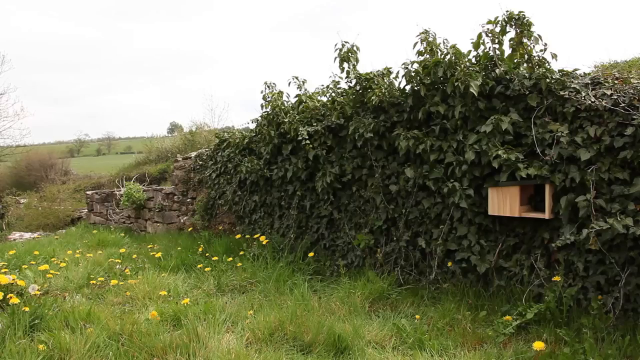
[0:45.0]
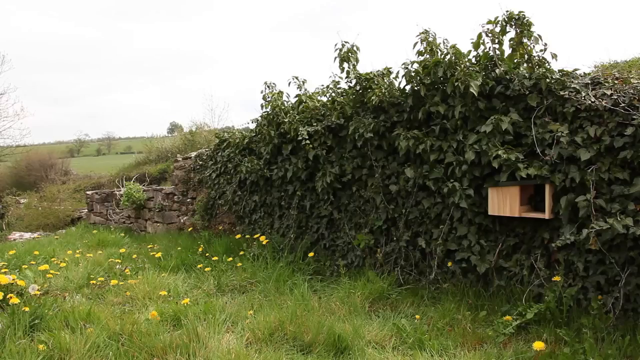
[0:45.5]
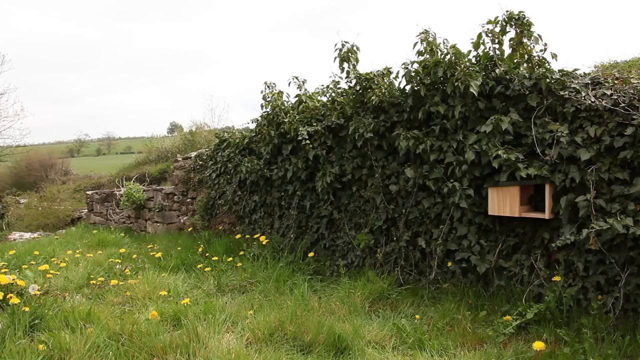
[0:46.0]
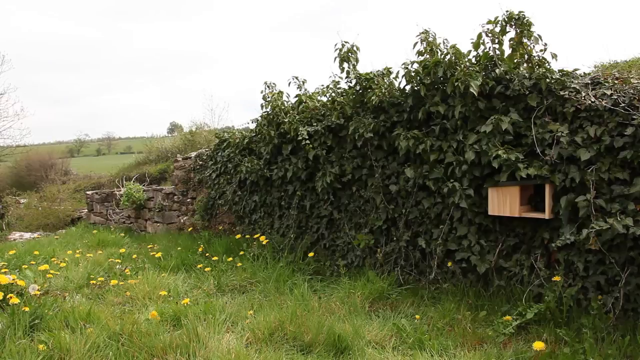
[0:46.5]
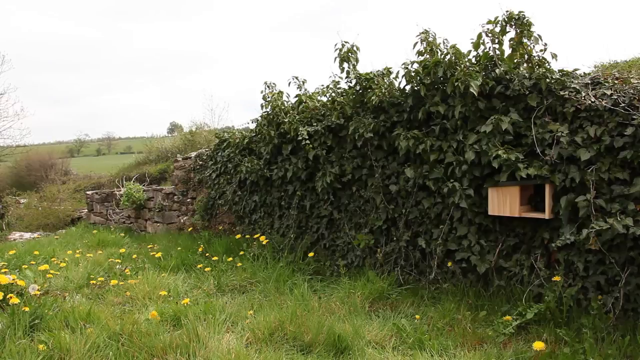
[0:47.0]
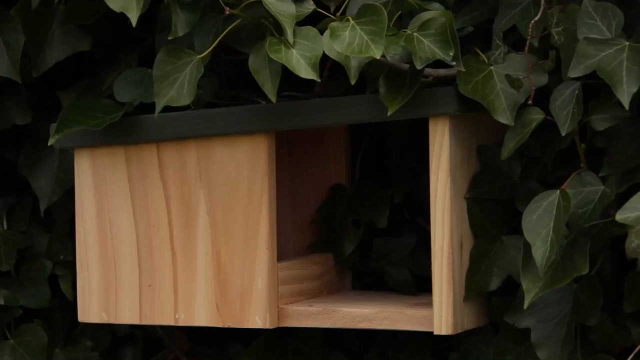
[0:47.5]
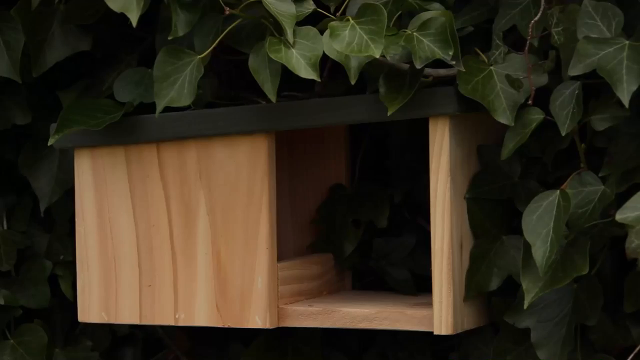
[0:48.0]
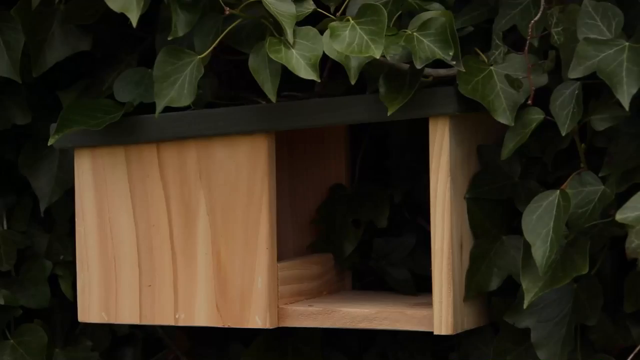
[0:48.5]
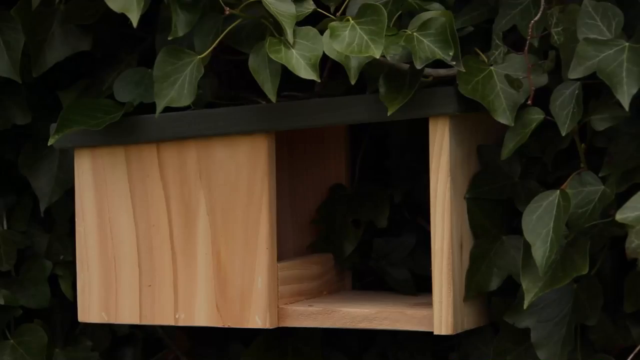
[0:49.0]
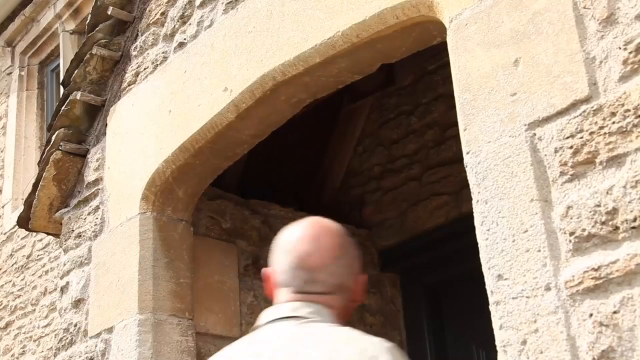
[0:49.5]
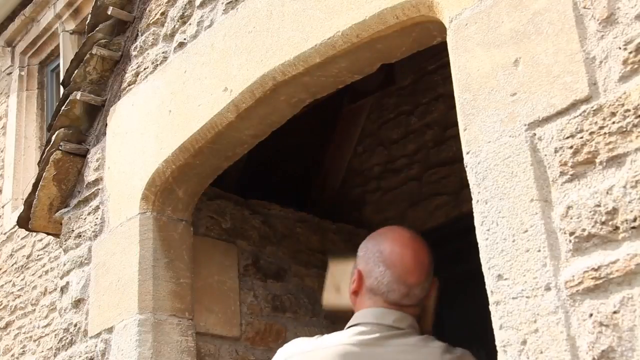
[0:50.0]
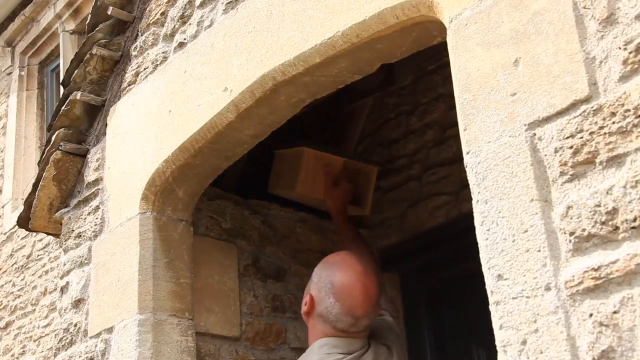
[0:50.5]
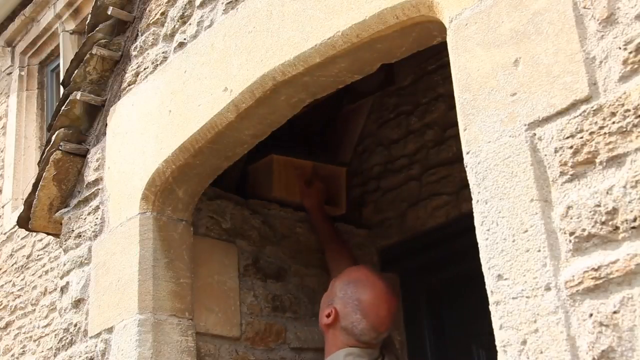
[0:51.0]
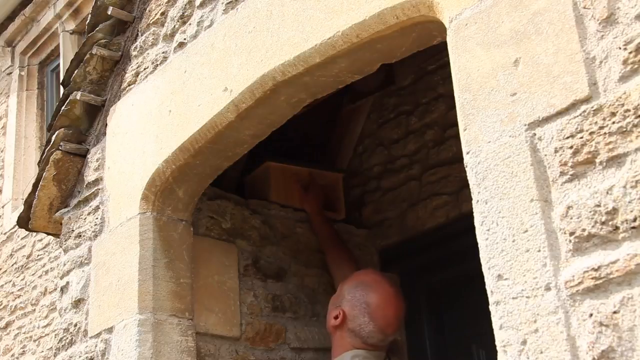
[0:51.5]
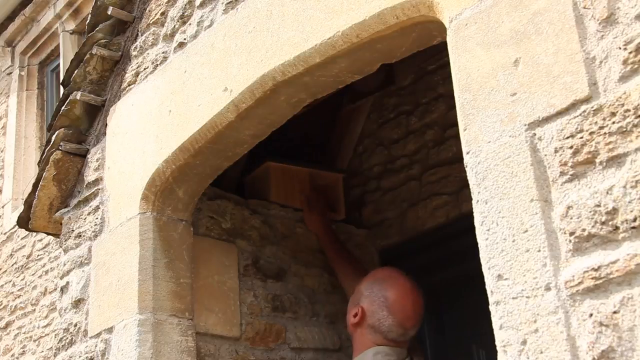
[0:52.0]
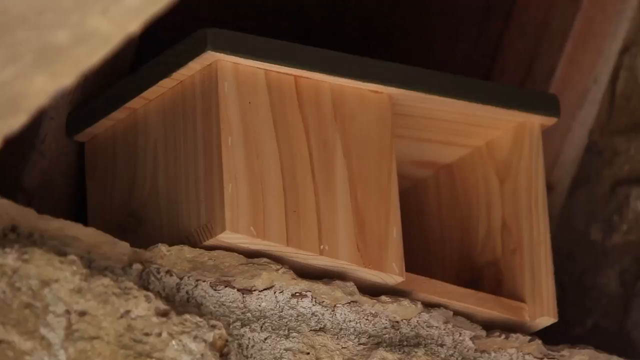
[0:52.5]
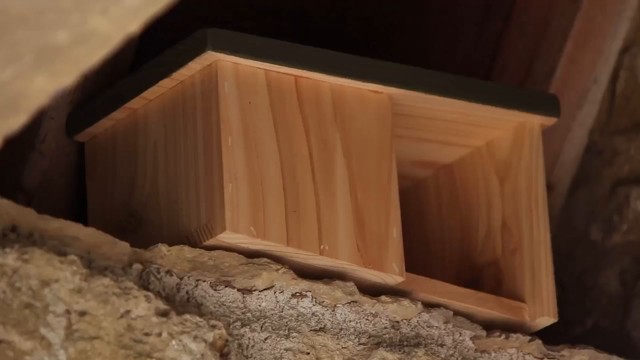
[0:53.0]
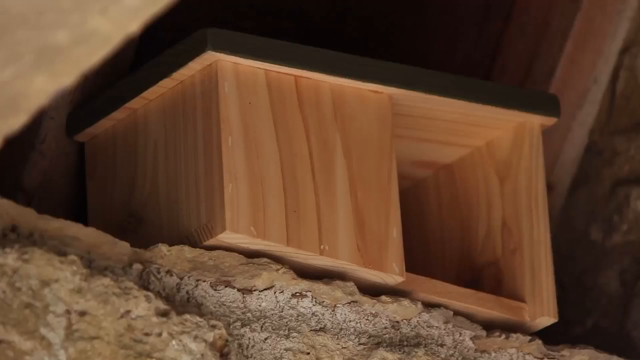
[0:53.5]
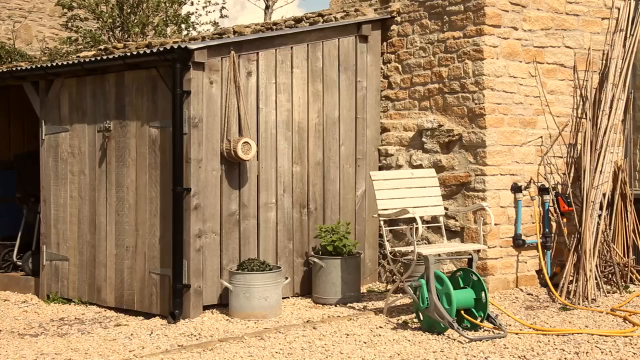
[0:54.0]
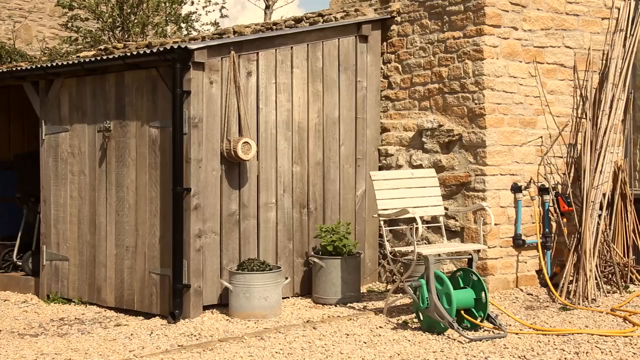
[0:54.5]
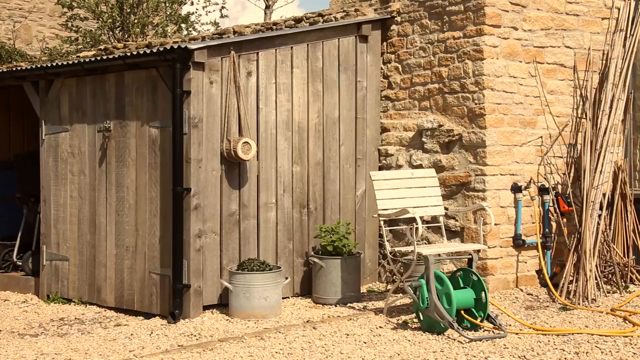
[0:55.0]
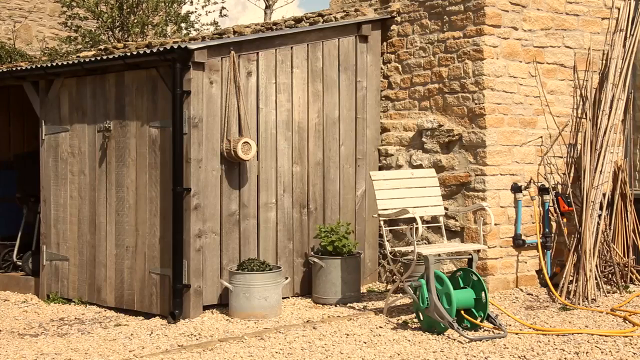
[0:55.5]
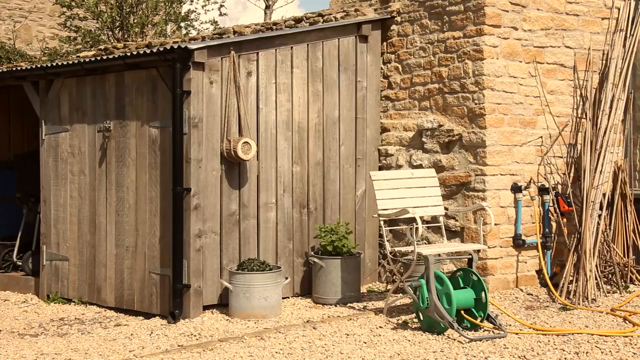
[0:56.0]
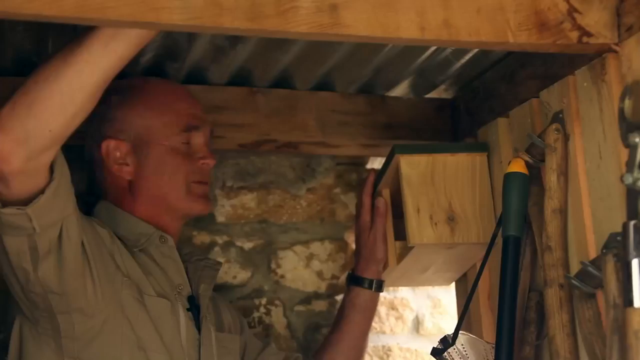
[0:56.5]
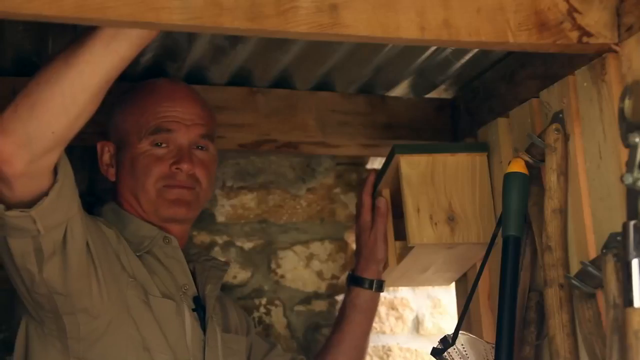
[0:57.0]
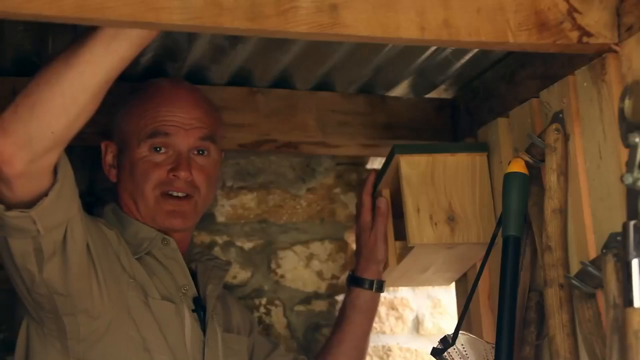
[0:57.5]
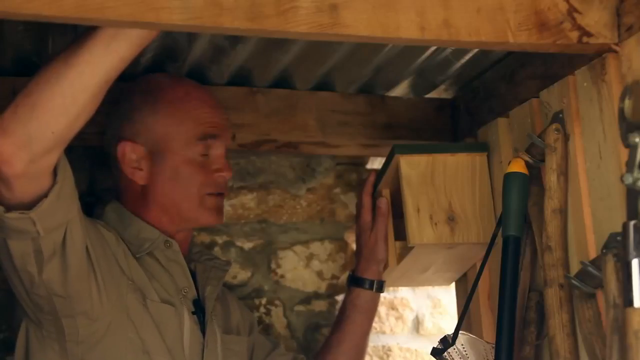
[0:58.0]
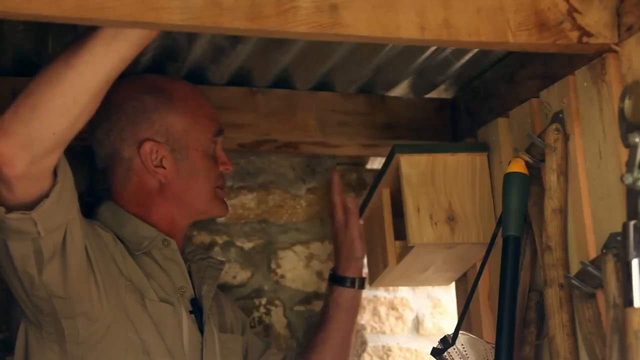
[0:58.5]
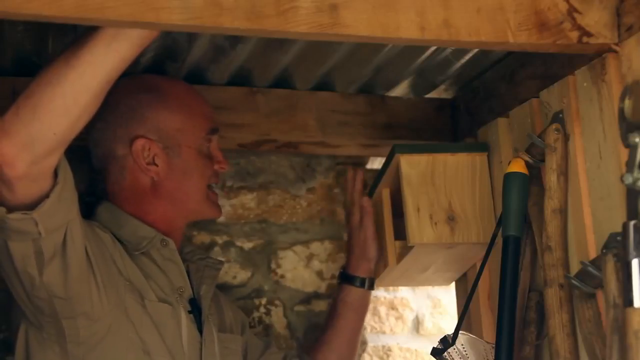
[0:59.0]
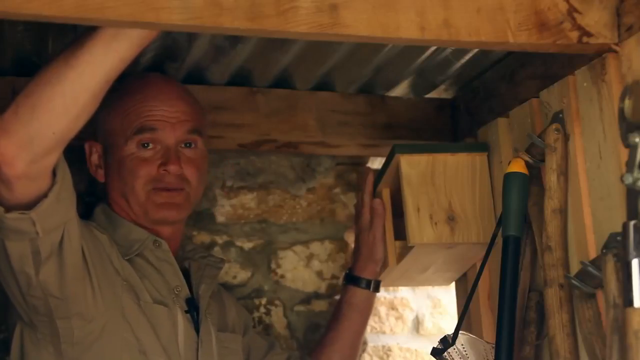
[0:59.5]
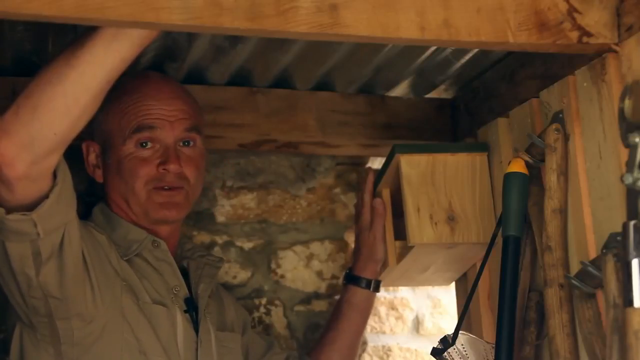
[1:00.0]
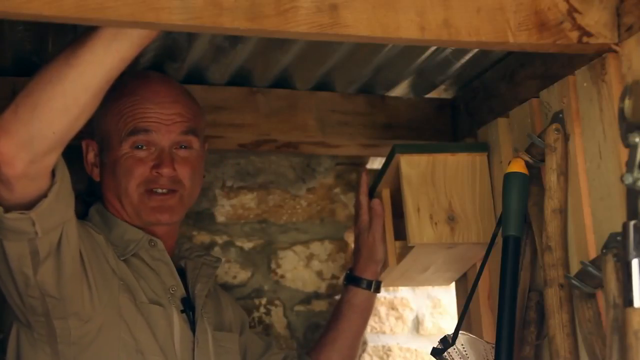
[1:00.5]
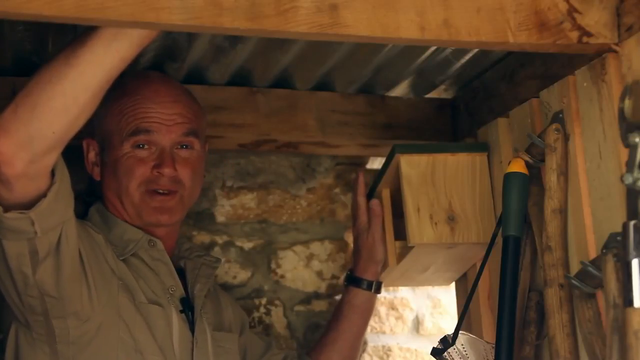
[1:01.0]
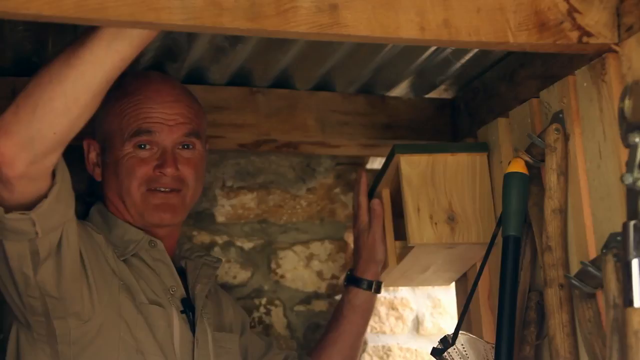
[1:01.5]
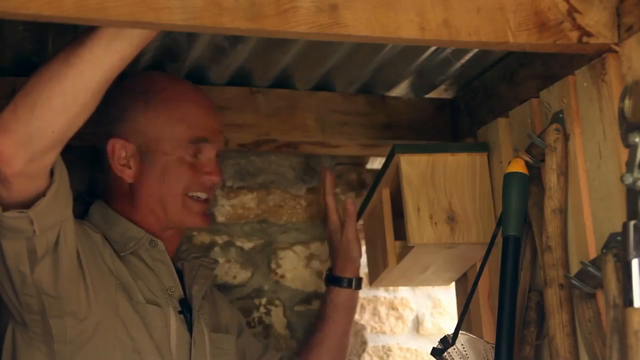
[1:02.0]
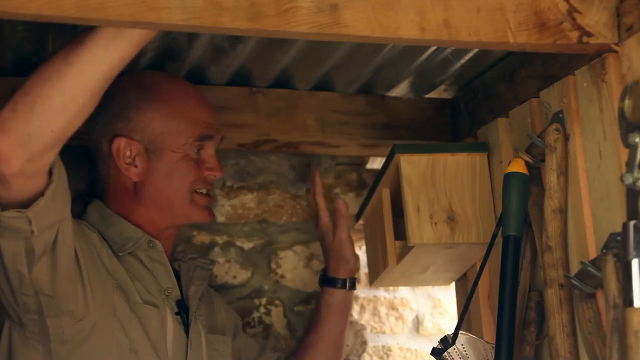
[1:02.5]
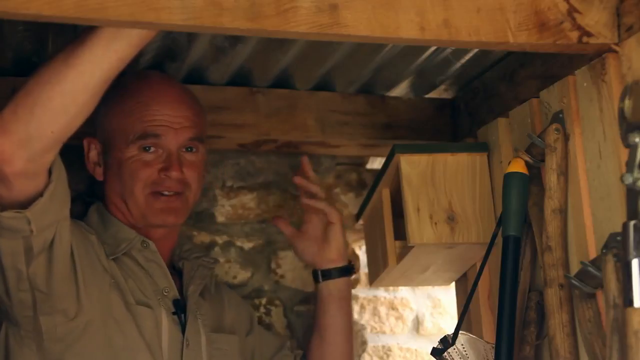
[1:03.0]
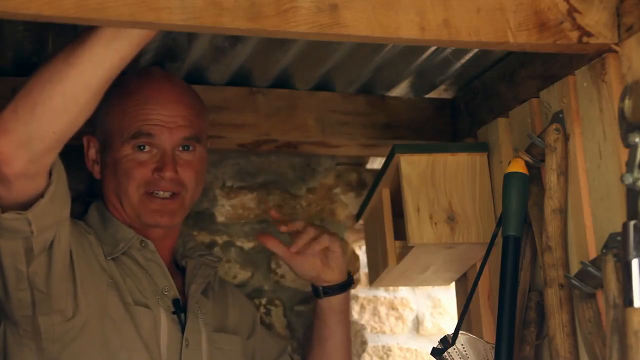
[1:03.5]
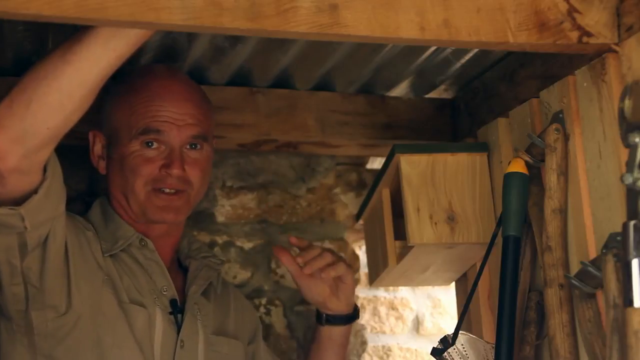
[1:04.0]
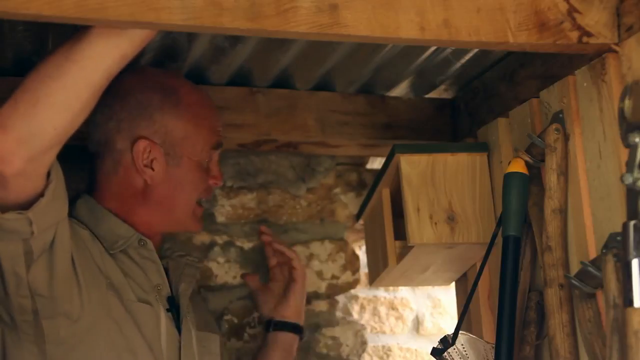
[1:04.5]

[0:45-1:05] A green grass area that looks like a garden appears. Next, the man is shown with the box, and he walks up to a house and places the box somewhere on the ceiling of the house. The box appears to be a house for birds, and he places boxes at different corners outdoors while continuing to talk. The man is very tall, and there are many buildings in the area.